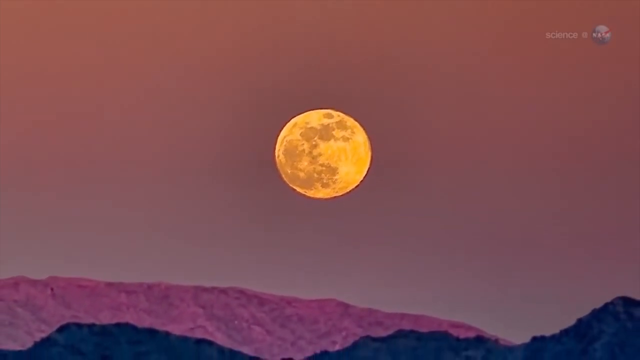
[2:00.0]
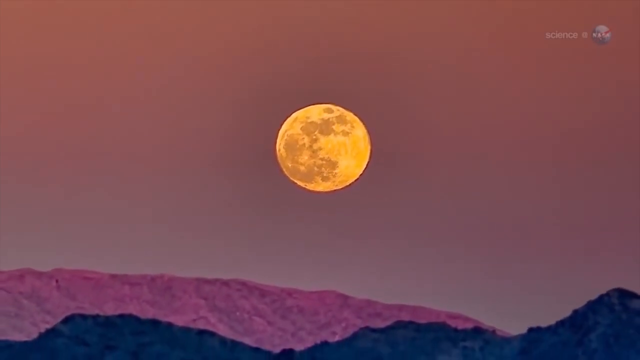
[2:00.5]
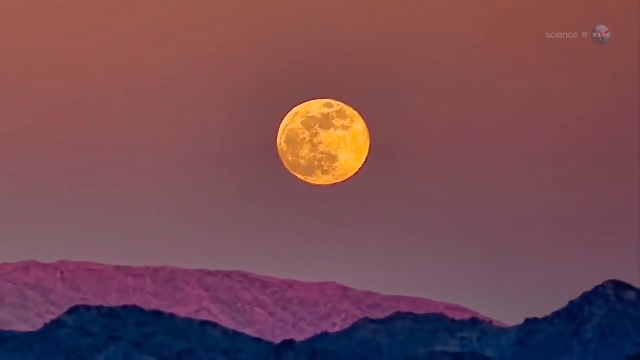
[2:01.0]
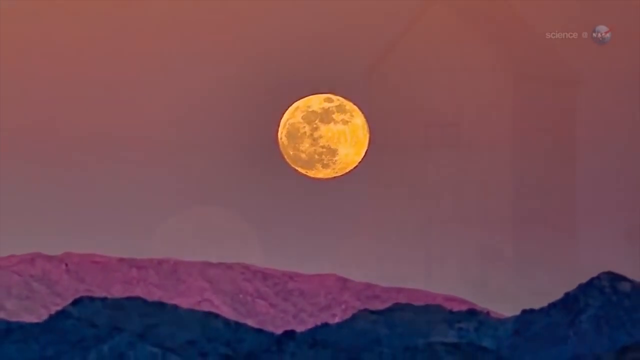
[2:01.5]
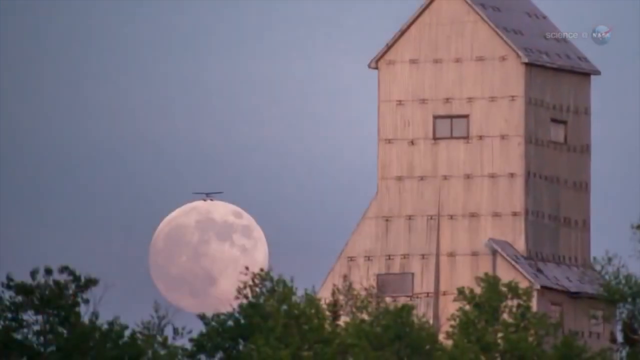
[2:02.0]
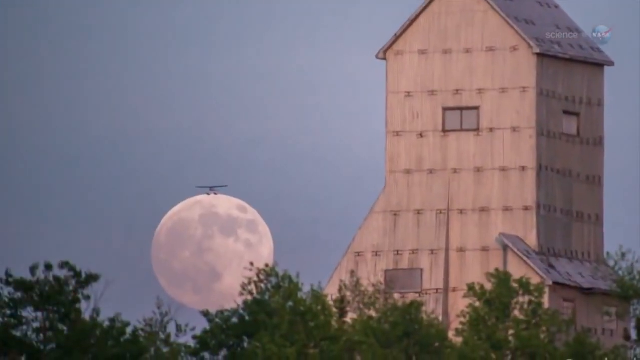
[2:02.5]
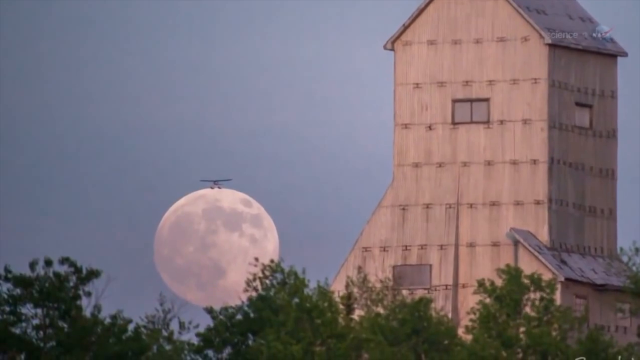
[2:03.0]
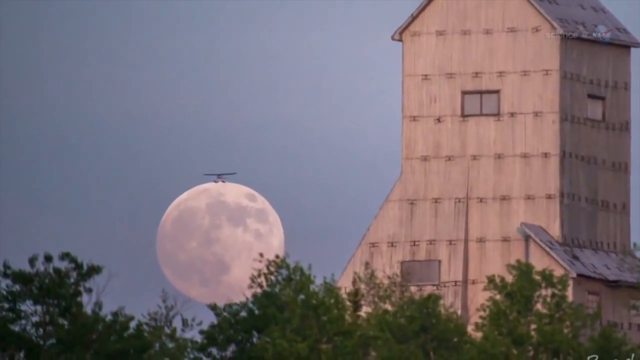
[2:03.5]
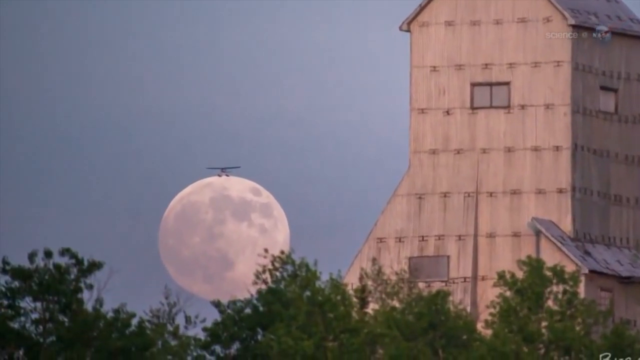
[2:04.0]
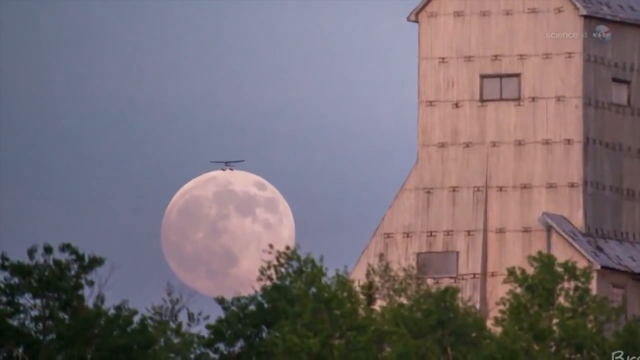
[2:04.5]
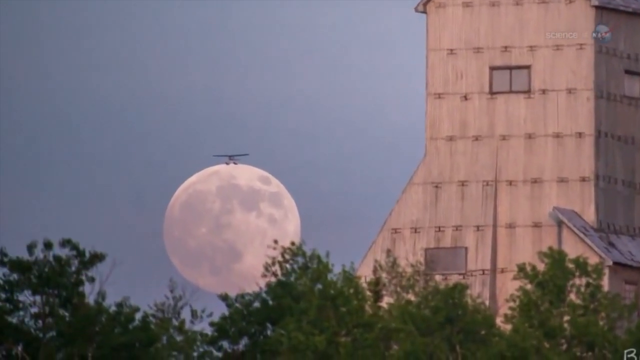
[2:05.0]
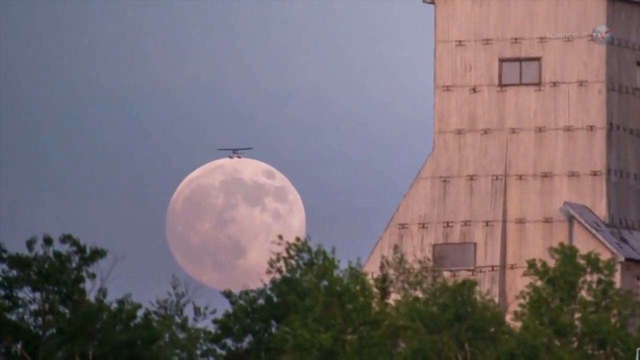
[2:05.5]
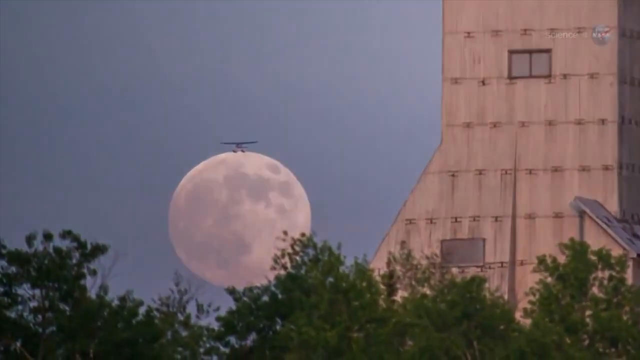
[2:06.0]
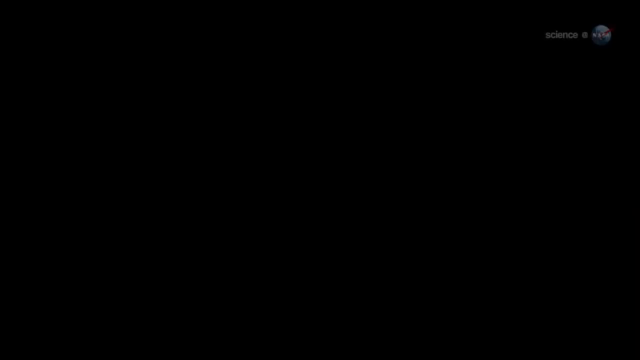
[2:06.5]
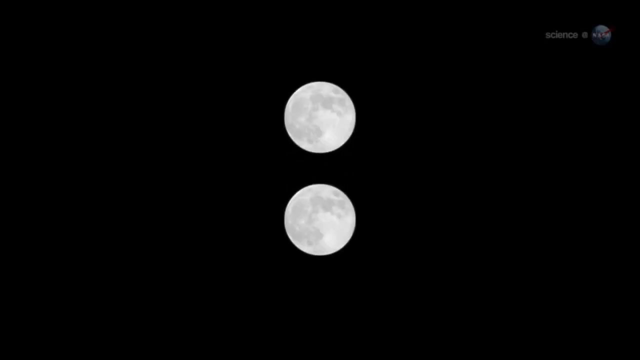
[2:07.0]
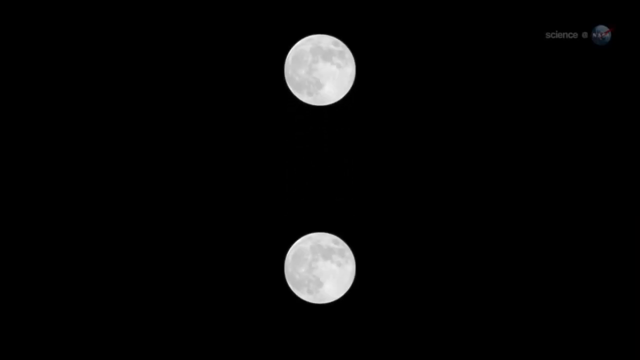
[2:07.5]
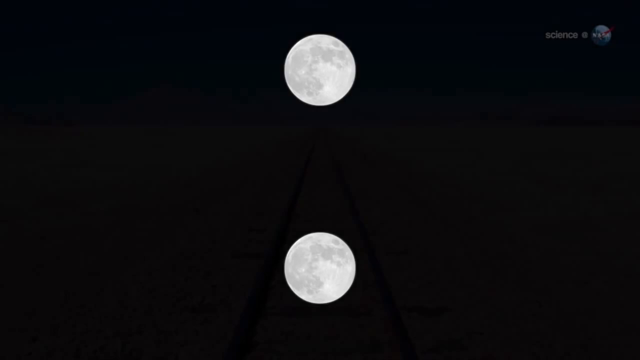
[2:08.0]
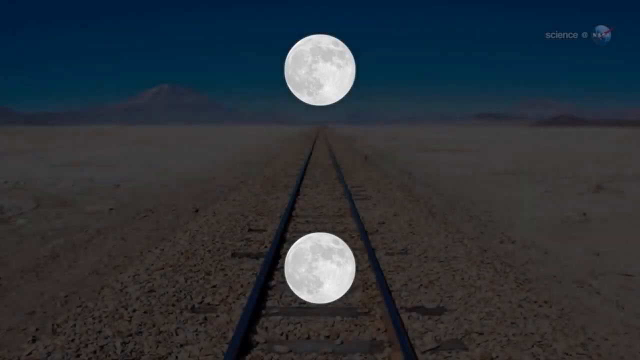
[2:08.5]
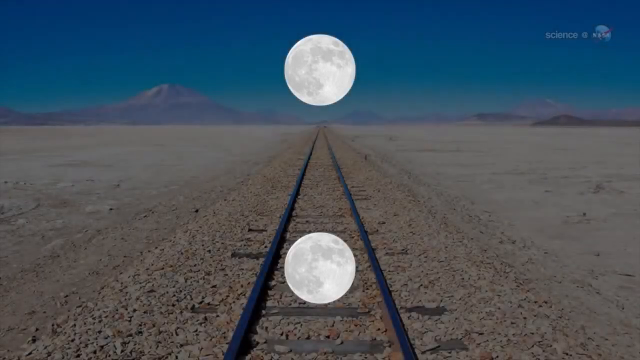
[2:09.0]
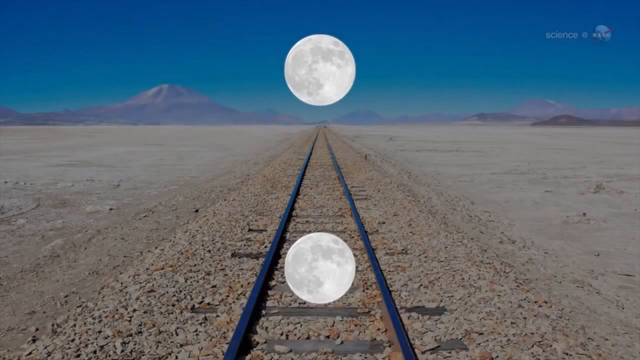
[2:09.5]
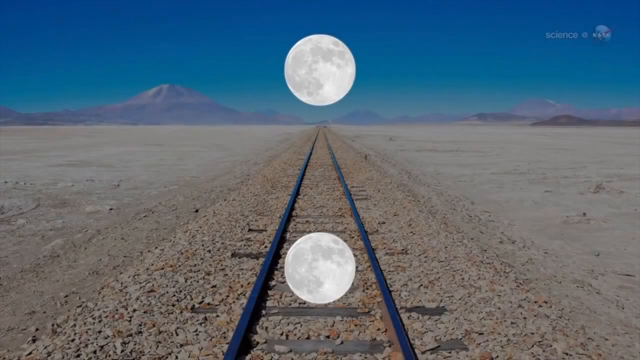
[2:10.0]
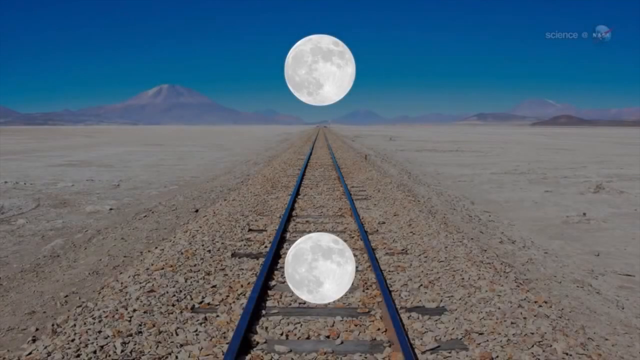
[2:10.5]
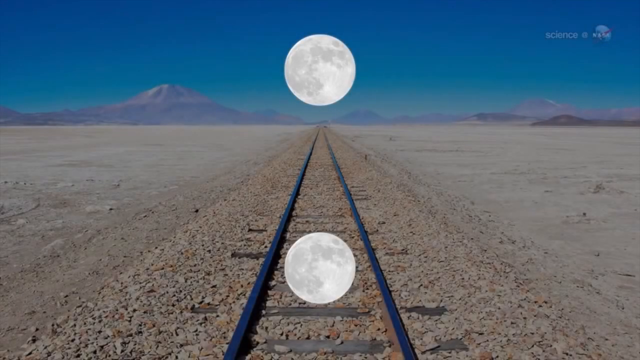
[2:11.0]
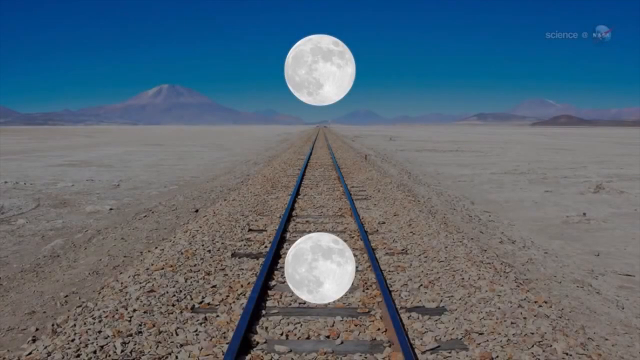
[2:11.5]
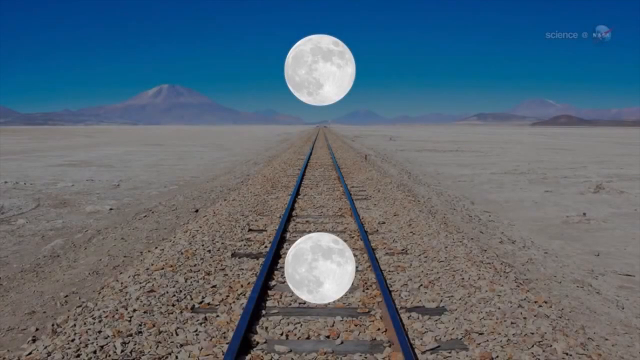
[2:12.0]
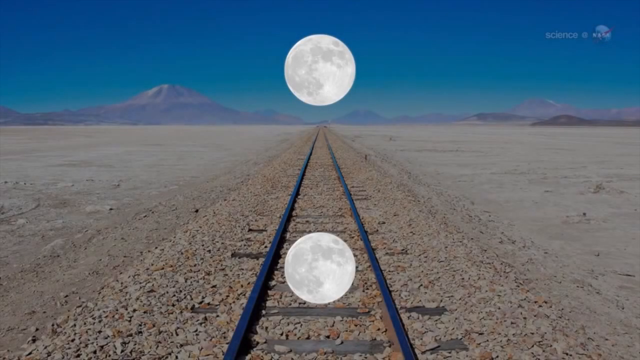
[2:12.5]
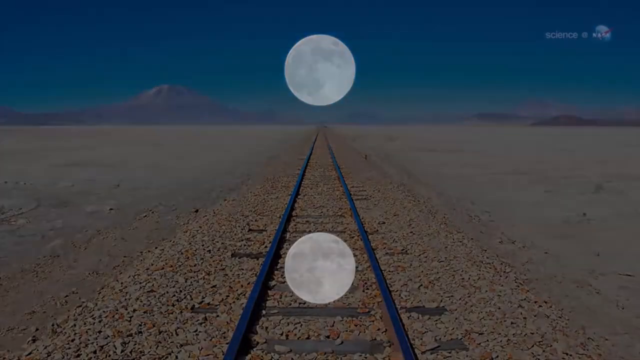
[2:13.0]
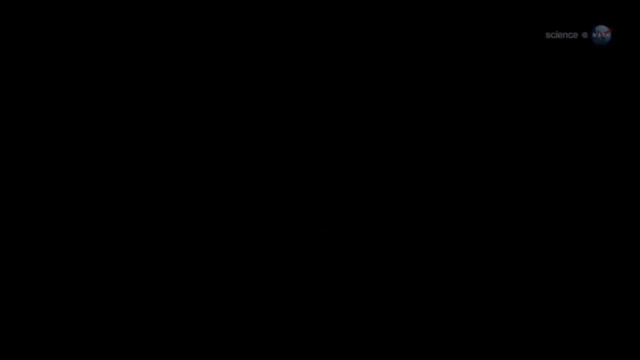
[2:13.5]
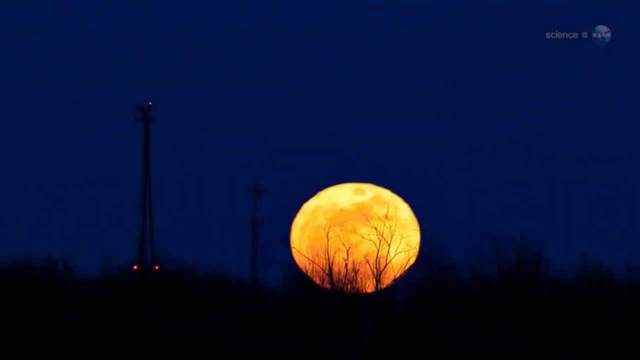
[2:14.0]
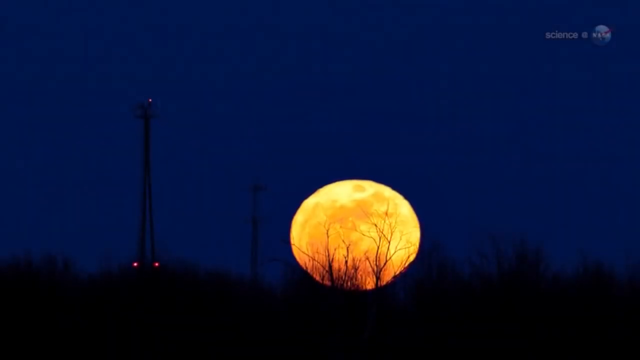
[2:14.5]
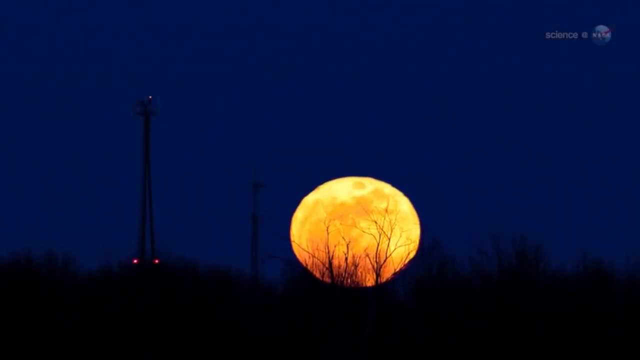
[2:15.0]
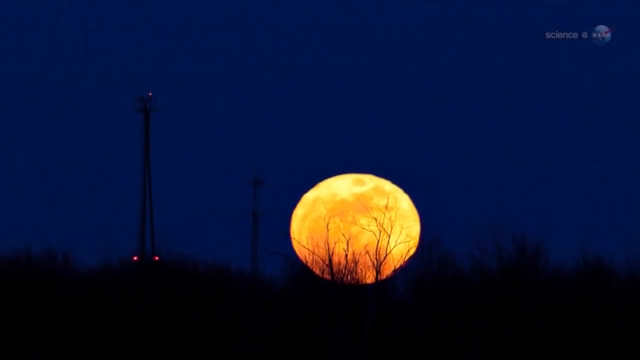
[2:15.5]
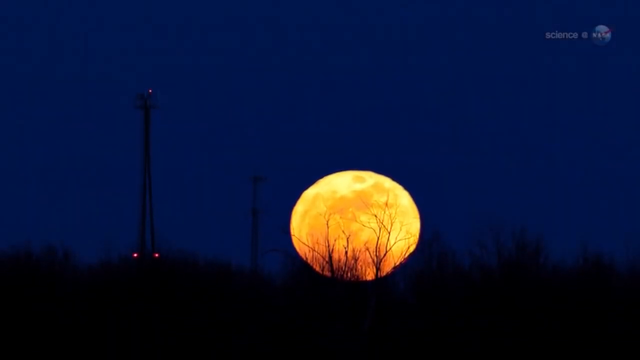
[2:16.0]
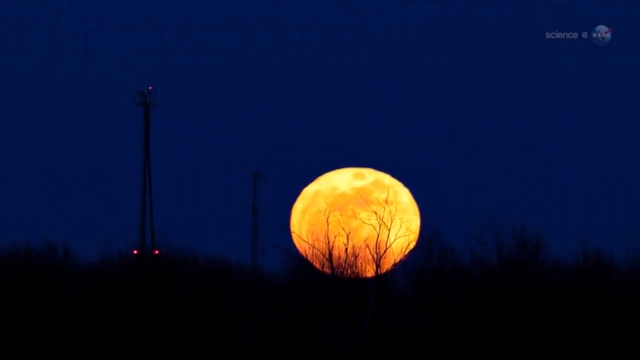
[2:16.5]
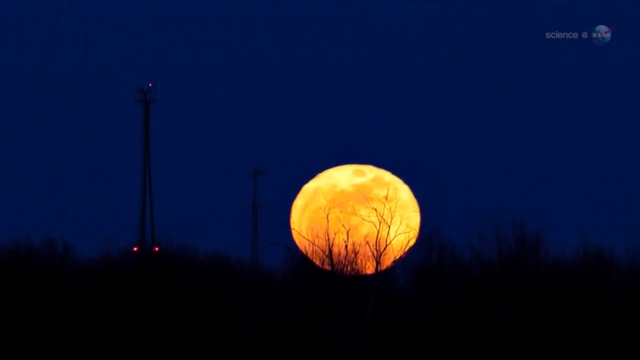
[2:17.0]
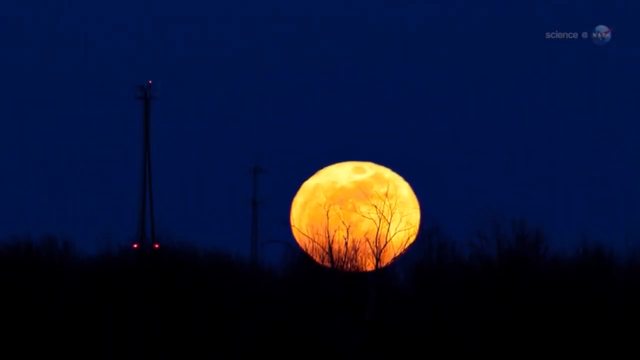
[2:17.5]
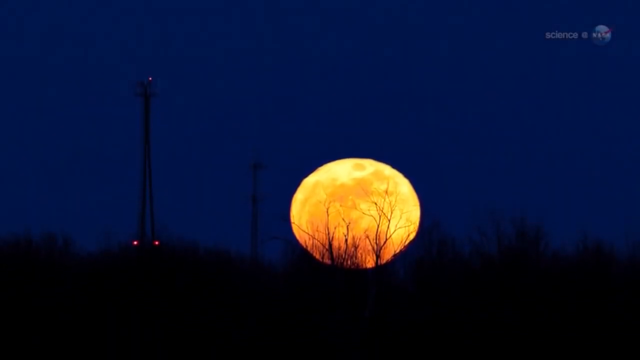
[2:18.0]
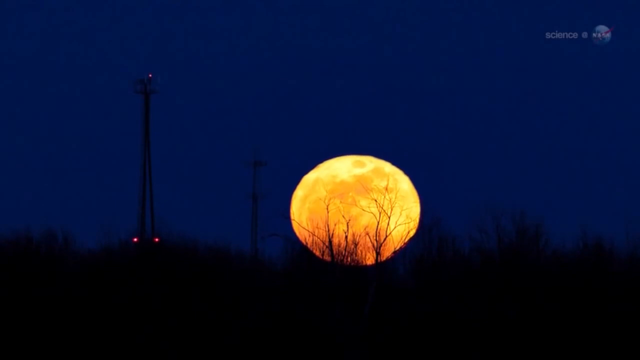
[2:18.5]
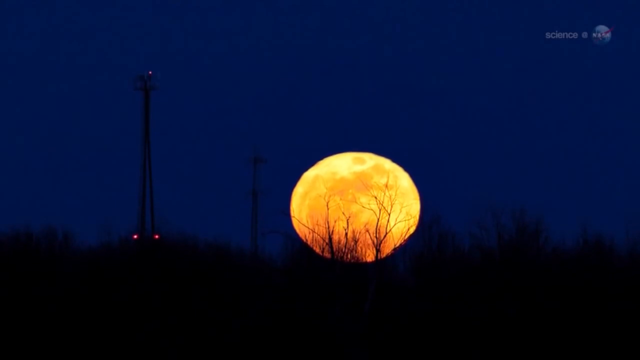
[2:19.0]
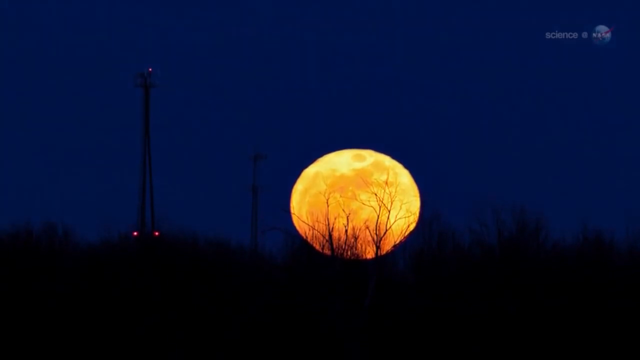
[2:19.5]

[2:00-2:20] The large yellow-looking moon over a landscape that looks like mountains is shown first, then it instantly transitions to a tall brown building with a few windows and what looks like maybe an aluminum roof, possibly some kind of farm building. A white moon is near the bottom toward the left, and the view zooms in on it. What looks like a plane appears almost as if it is on top of the moon, though it is not. Trees are at the bottom. It transitions to a black screen showing two moons splitting apart, one going to the top of the frame and the other to the bottom. Next, train tracks run through what looks like a desert, with a mountain in the background and a bright blue sky; this stays on screen for a second. Then a very dark navy blue sky, probably nighttime, shows a very yellowish-orange moon rising above trees, with kind of a tower, maybe a cell phone tower, off to the left.